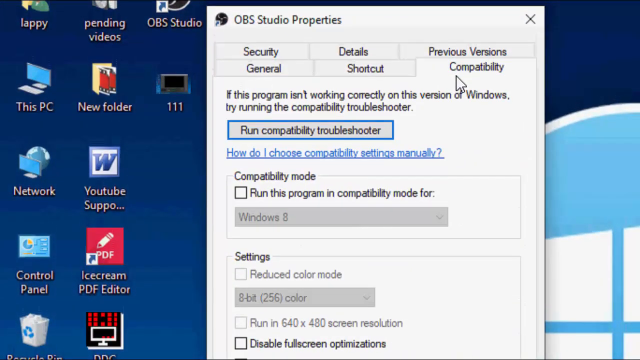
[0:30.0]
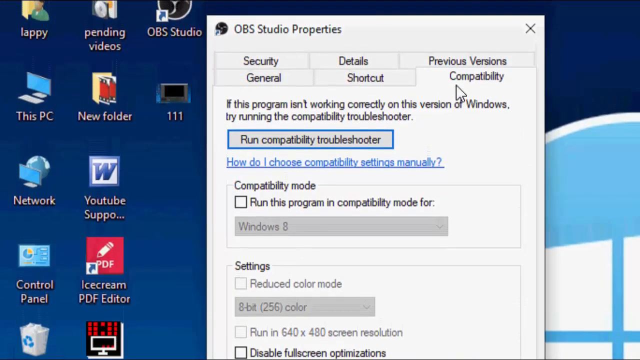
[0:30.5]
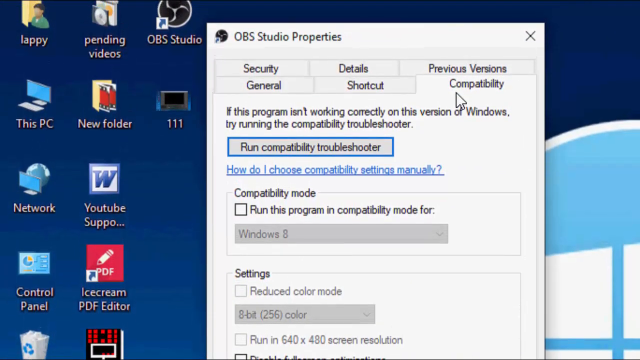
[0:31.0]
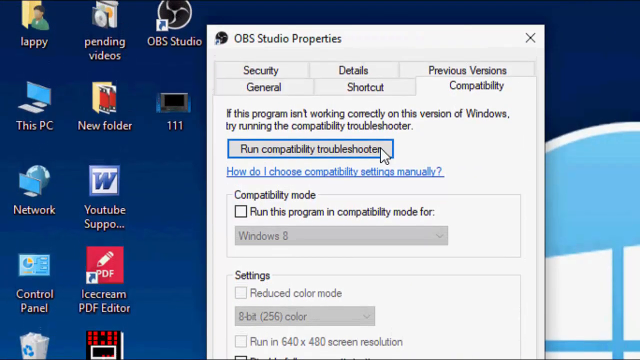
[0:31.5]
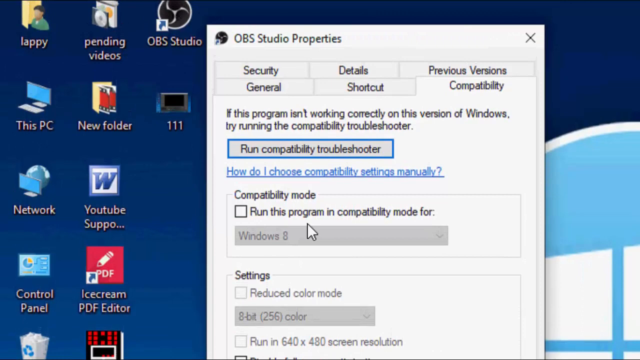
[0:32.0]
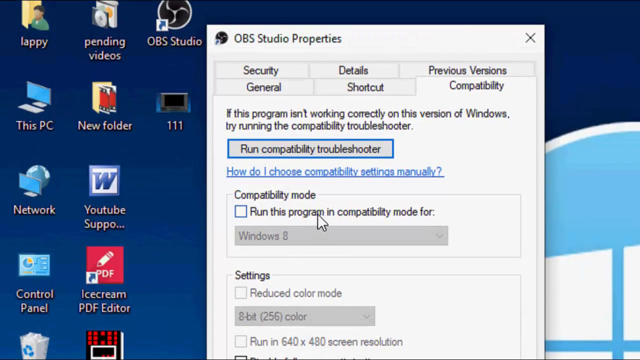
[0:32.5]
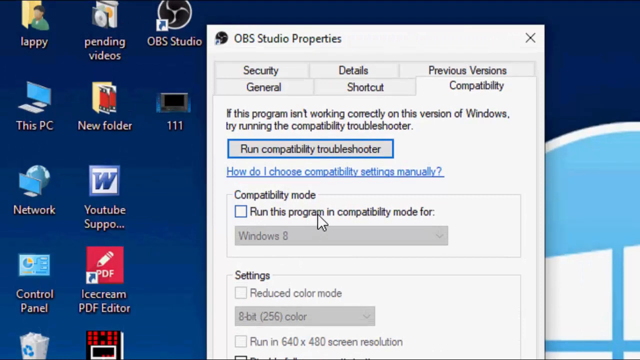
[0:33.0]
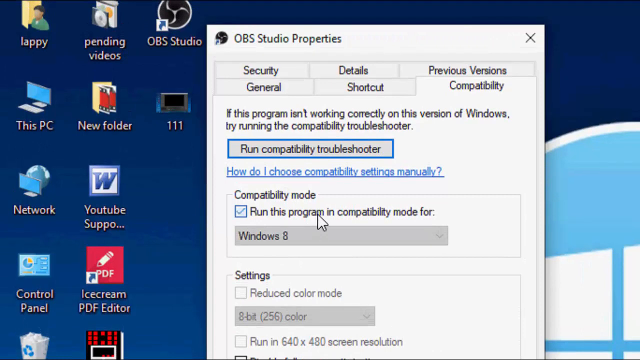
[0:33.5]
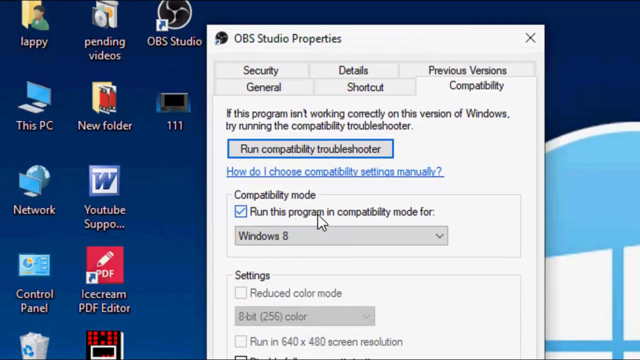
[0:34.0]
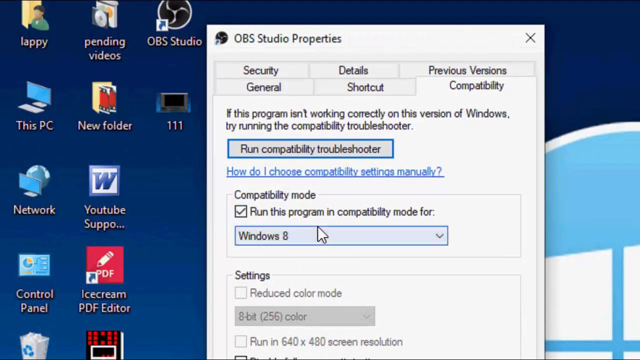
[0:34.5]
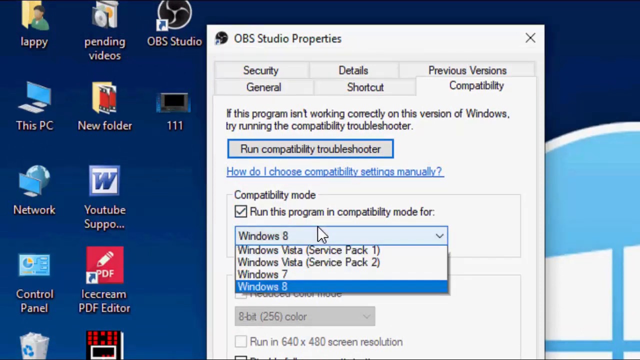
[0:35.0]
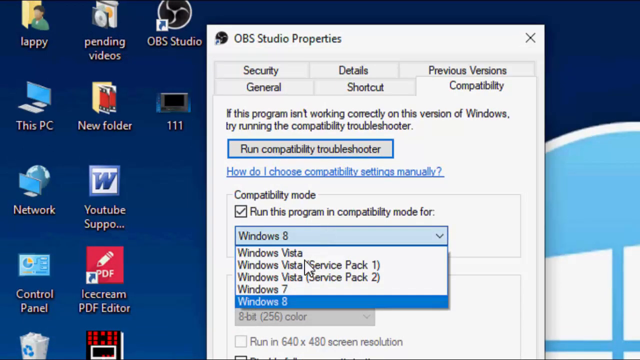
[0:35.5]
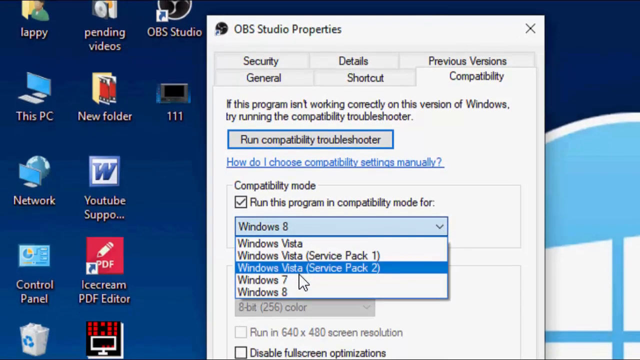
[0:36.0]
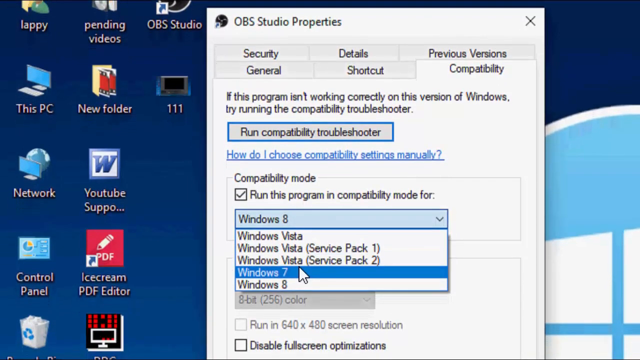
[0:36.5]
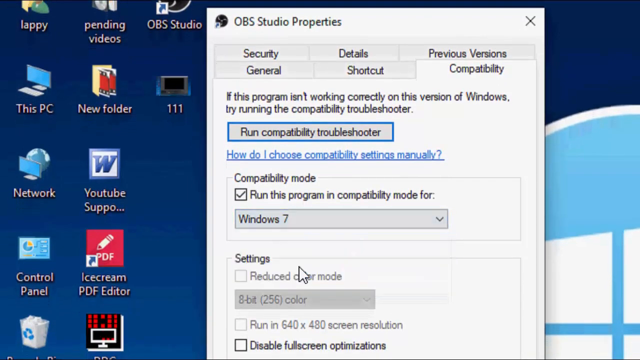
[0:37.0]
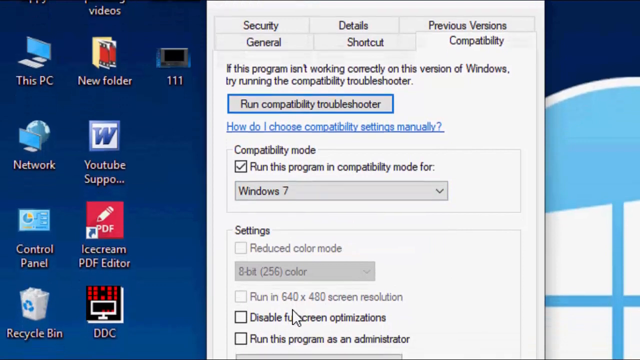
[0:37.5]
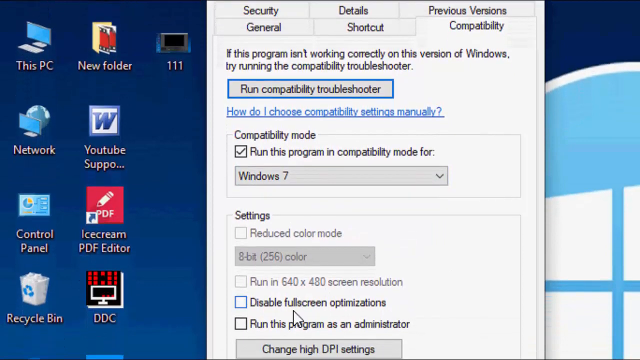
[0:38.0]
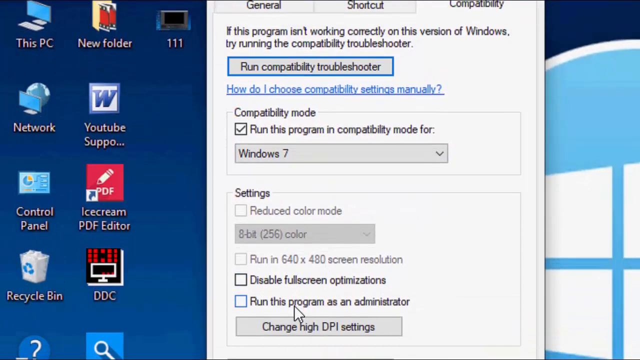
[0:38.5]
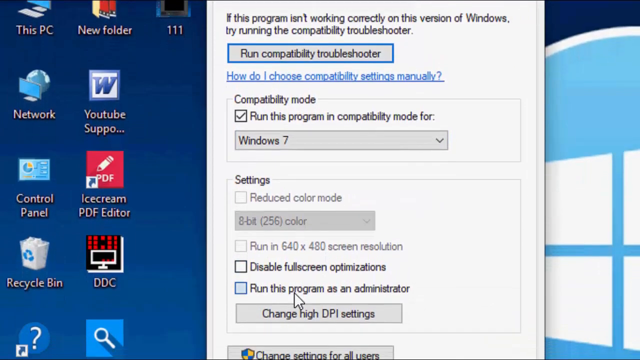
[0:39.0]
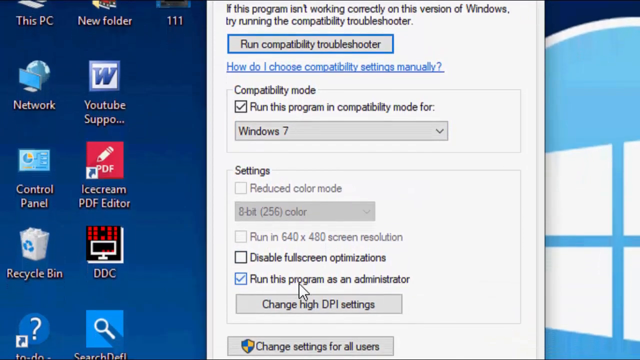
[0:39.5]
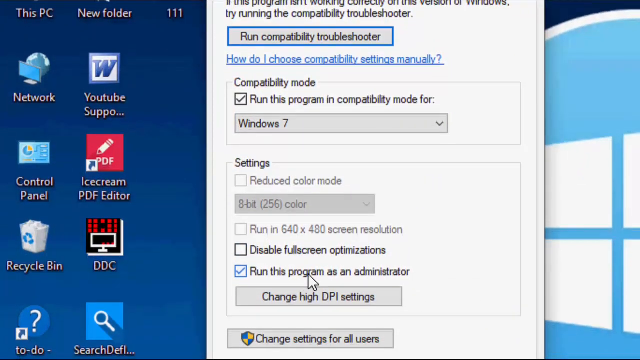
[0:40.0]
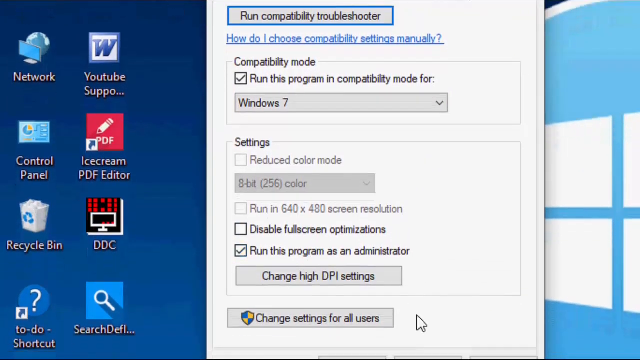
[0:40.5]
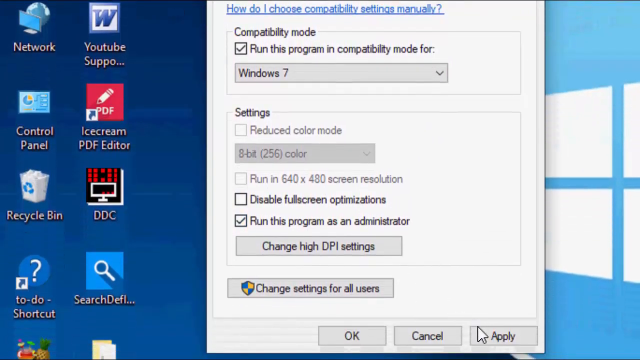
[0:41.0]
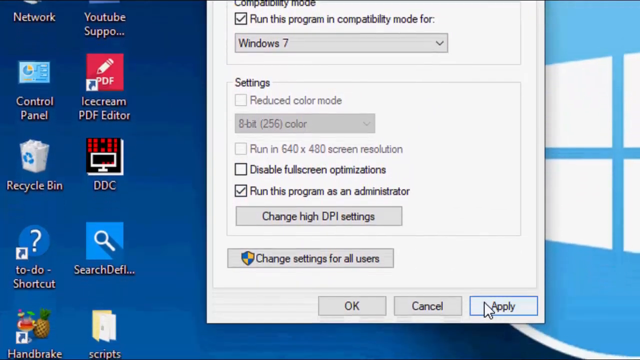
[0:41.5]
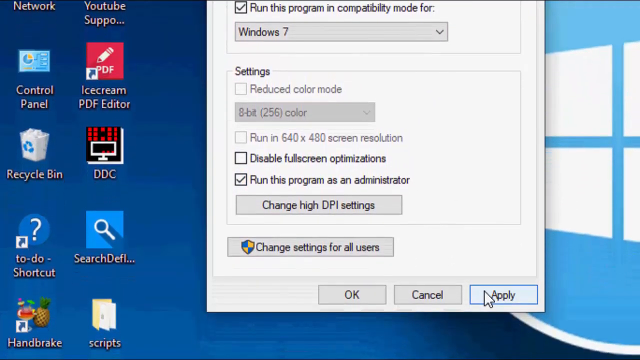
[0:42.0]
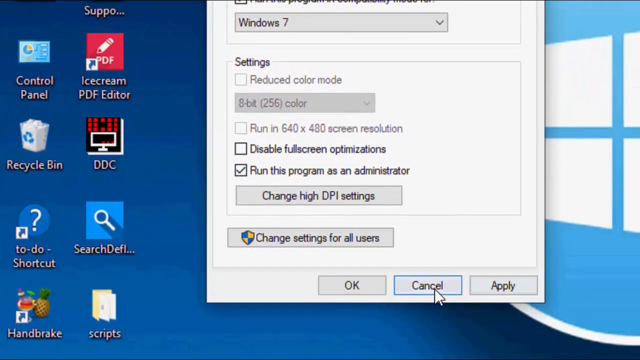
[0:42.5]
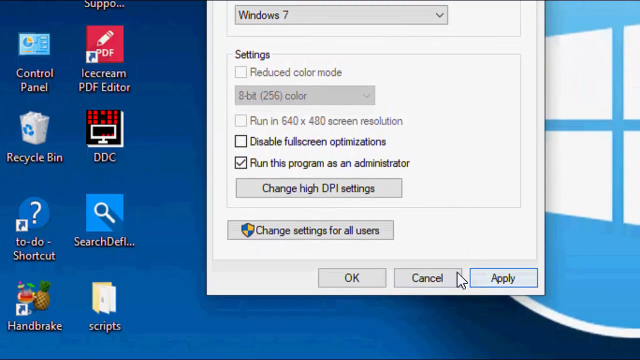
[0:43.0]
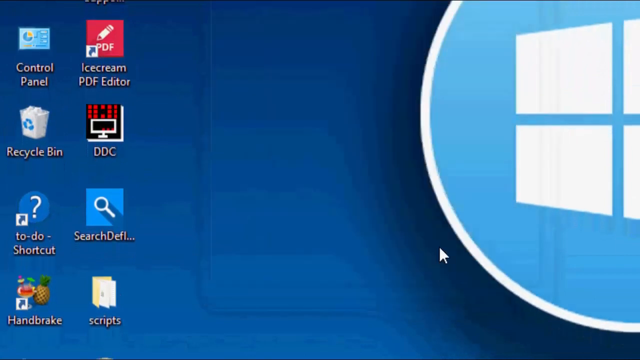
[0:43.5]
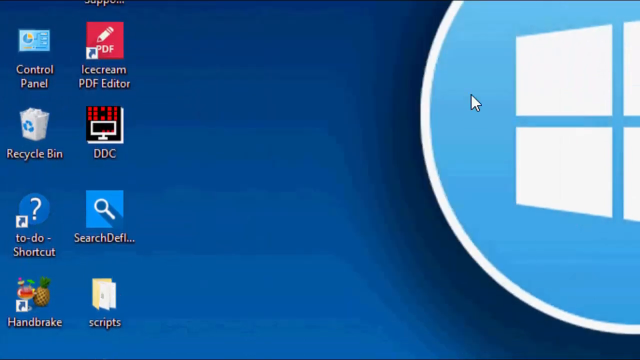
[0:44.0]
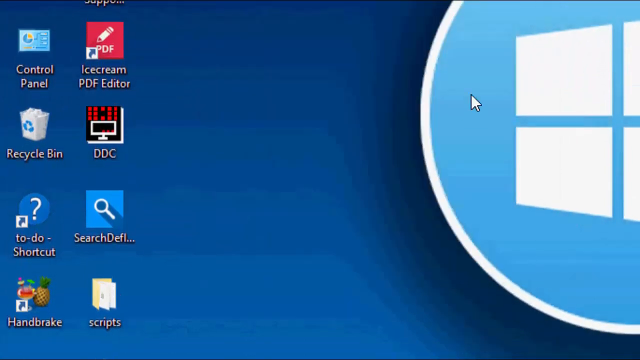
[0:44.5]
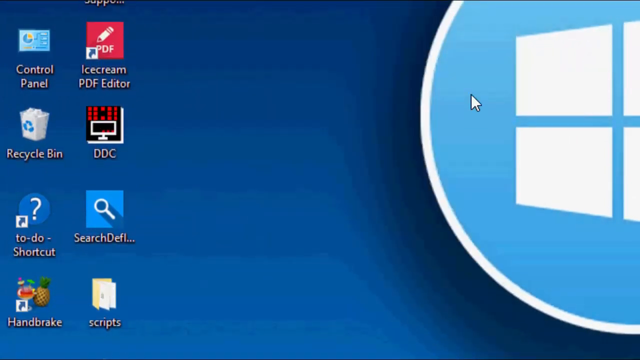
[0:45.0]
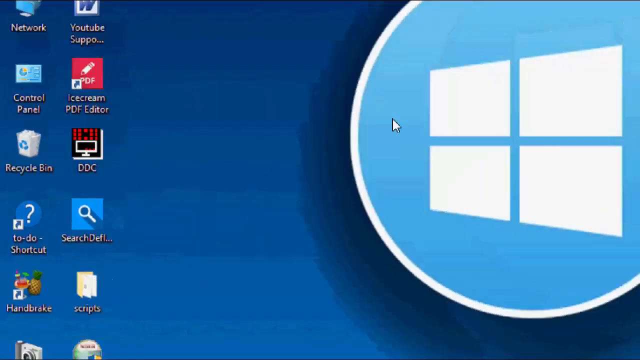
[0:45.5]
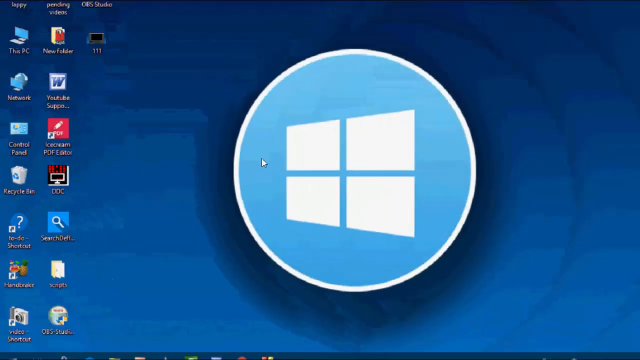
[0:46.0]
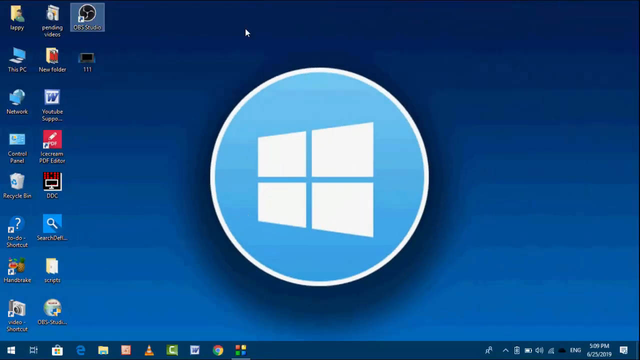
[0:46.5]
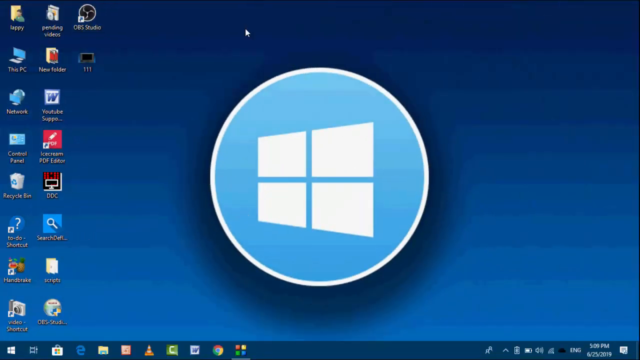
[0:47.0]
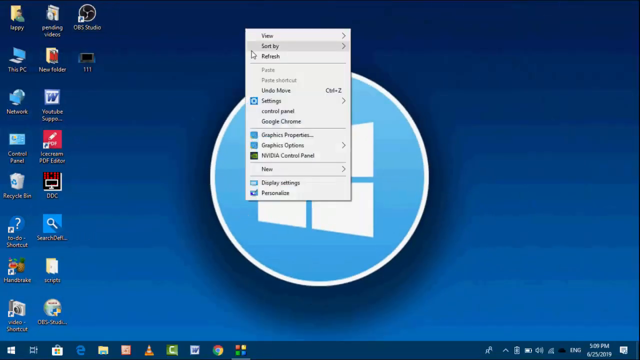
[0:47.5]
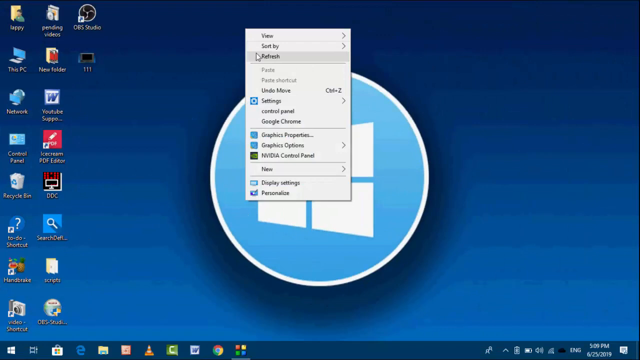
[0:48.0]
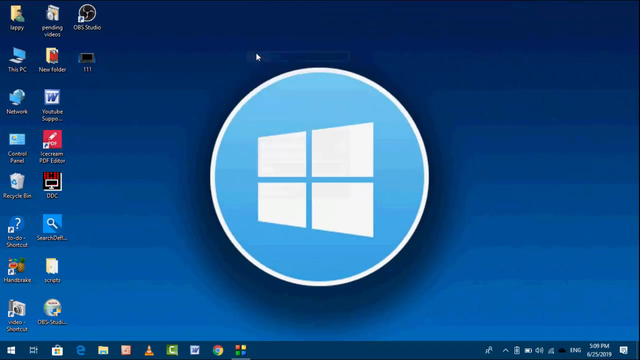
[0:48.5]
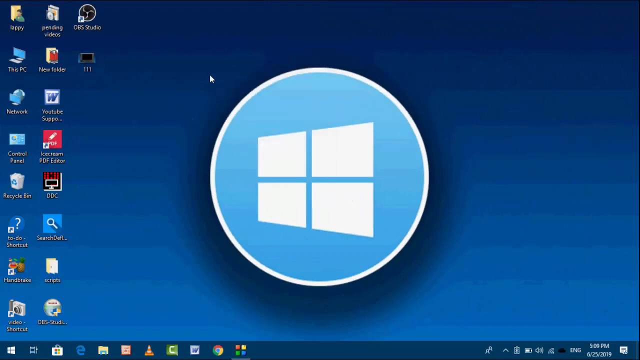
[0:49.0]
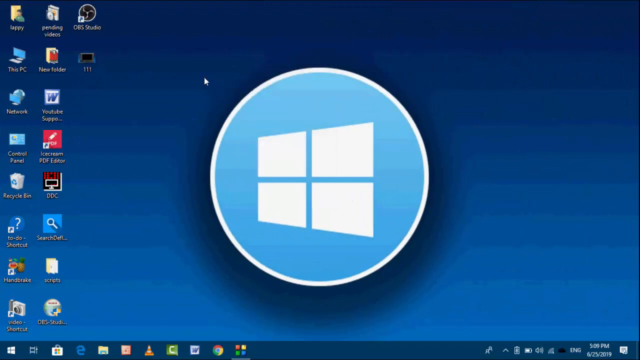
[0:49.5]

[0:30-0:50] The person remains in the OBS Studio Properties window, which has six tabs: Security, Details, Previous Versions, General, Shortcut and Compatibility. On the selected Compatibility tab, text says "If this program isn't working correctly on this version of Windows, try running the compatibility troubleshooter." Below that is a button highlighted in blue reading "Run compatibility troubleshooter", and below it, written in blue, "How do I choose compatibility settings manually?" Next is "Compatibility mode" with an unchecked box to the left of "Run this program in compatibility mode", and below that "Windows 8". Further down is an unchecked "Reduced color mode" with text beginning "8-bit" below it. The person checks "Run this program in compatibility mode" and changes the setting below to Windows 7. They then scroll down to "Disable full screen optimization".